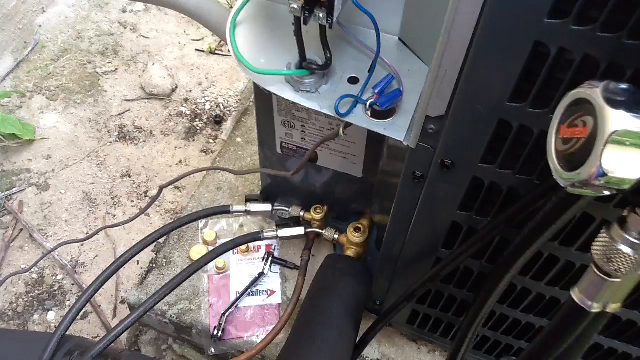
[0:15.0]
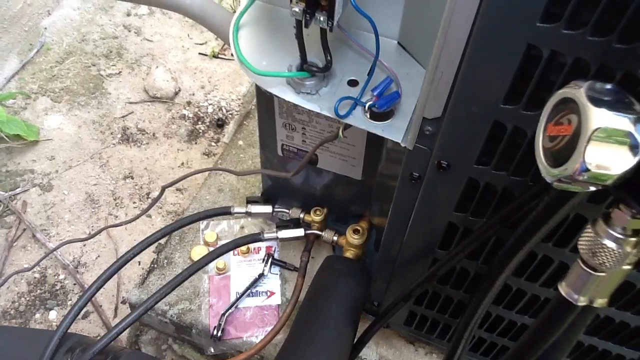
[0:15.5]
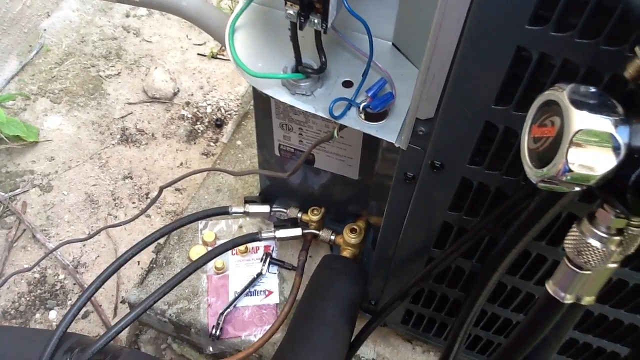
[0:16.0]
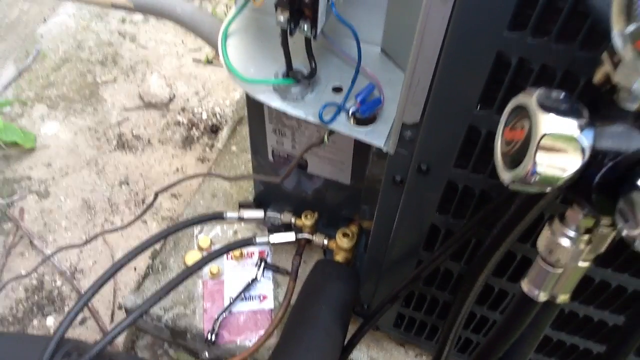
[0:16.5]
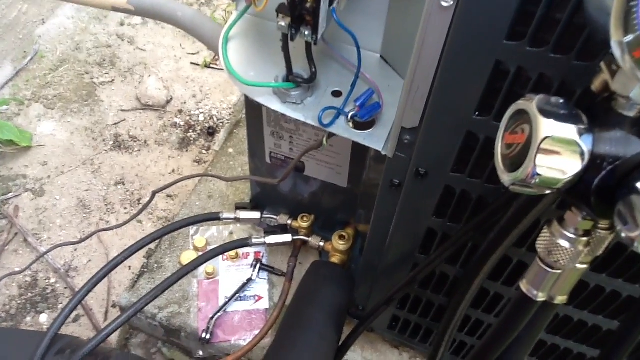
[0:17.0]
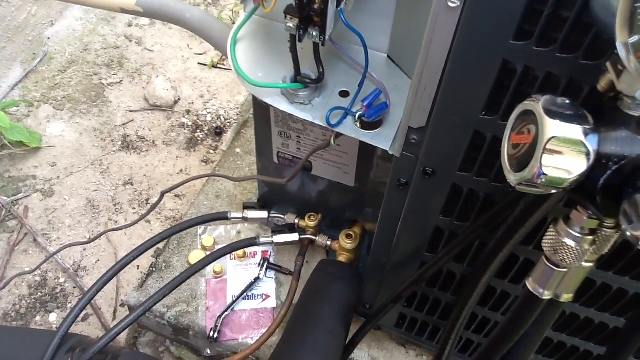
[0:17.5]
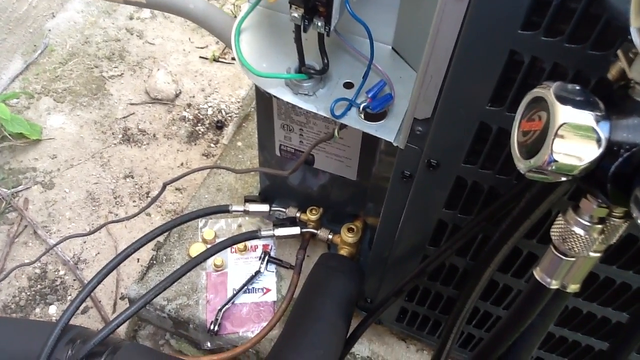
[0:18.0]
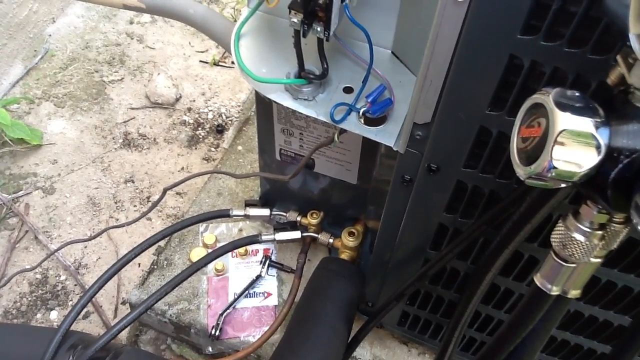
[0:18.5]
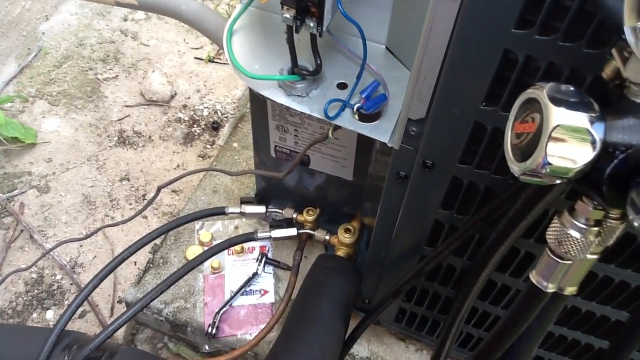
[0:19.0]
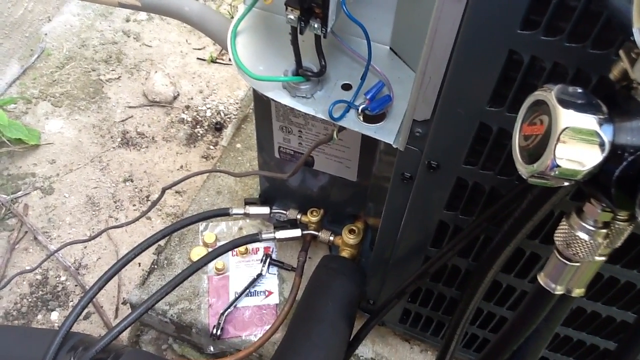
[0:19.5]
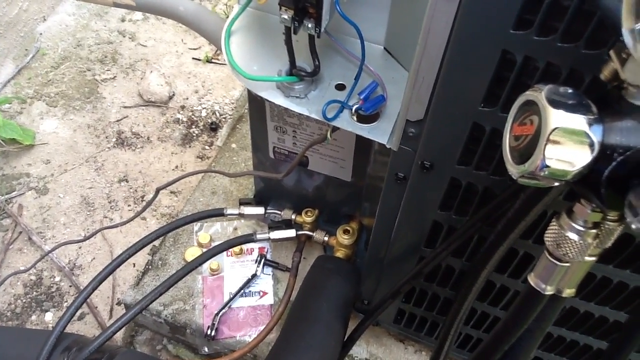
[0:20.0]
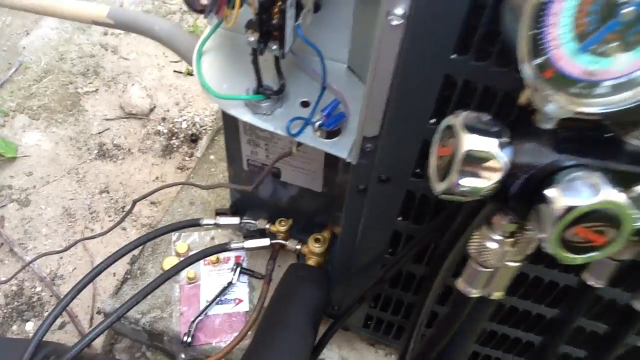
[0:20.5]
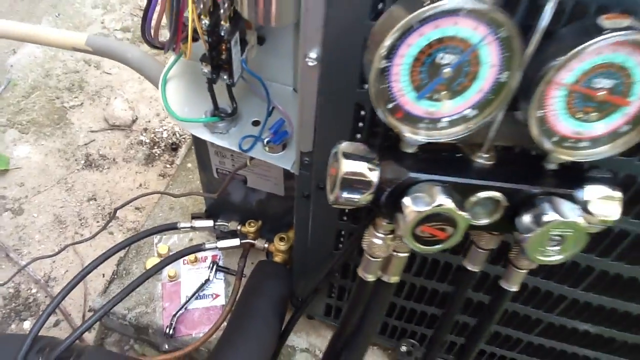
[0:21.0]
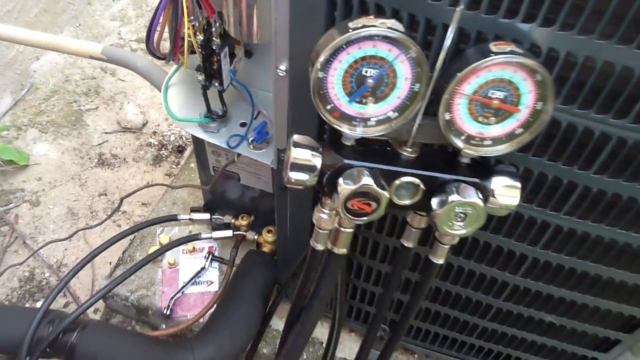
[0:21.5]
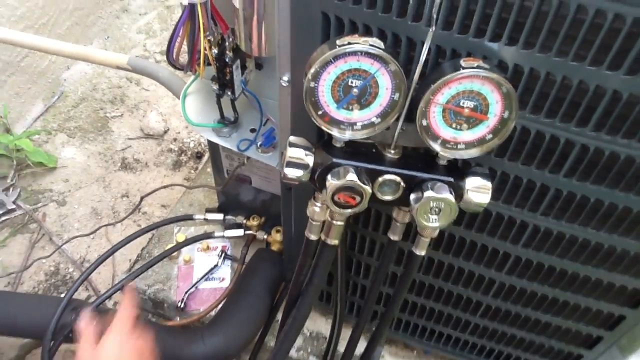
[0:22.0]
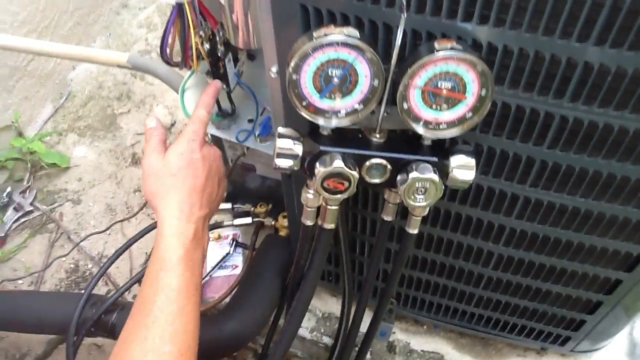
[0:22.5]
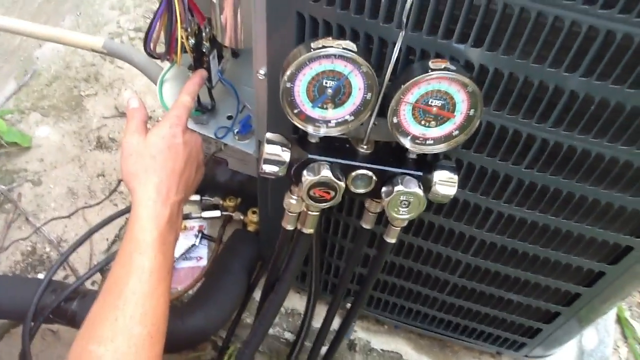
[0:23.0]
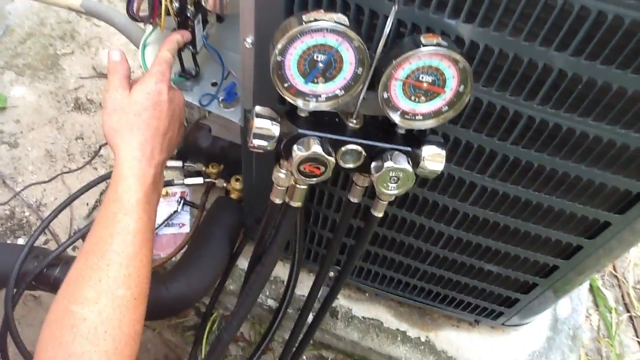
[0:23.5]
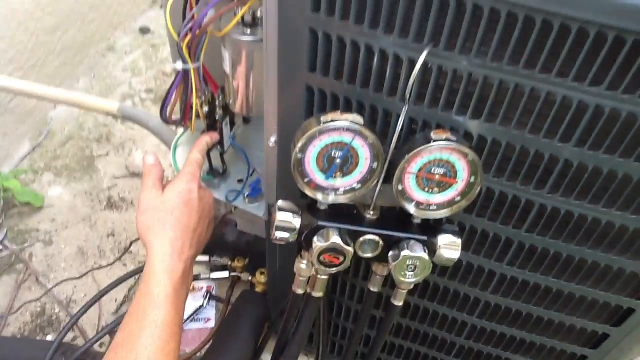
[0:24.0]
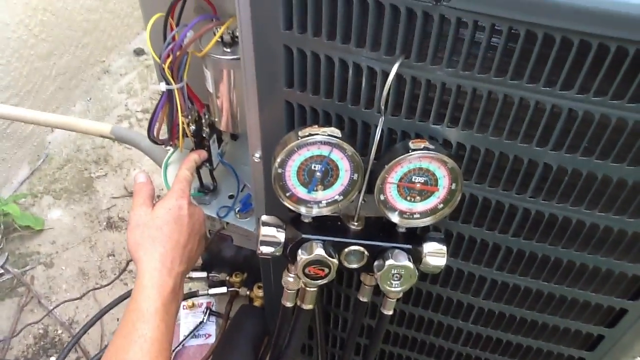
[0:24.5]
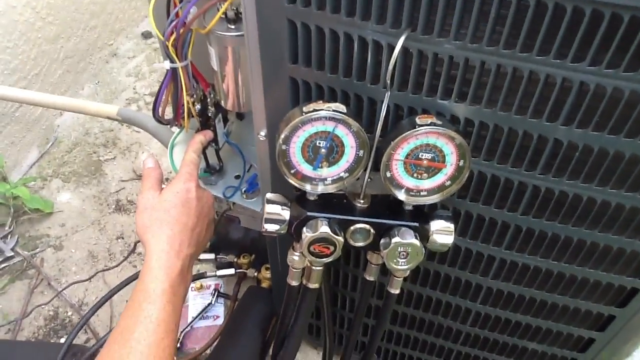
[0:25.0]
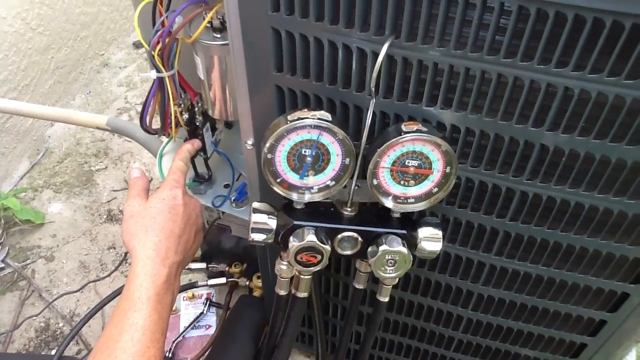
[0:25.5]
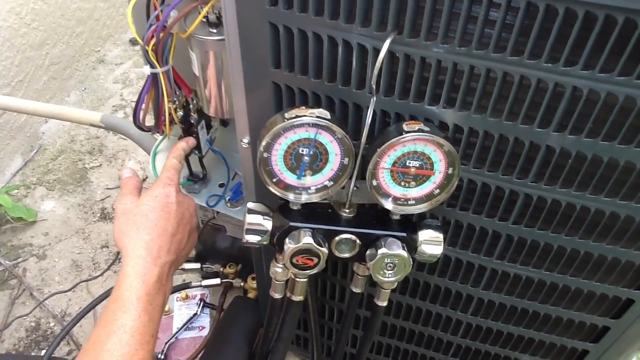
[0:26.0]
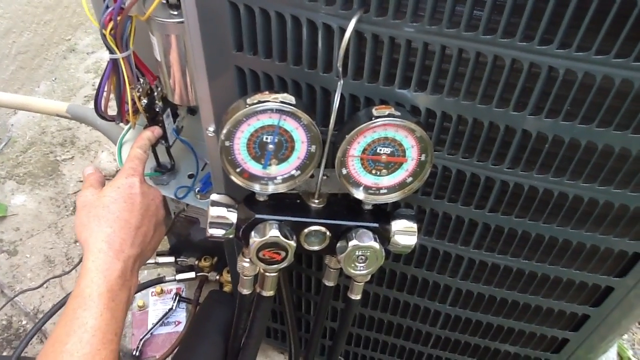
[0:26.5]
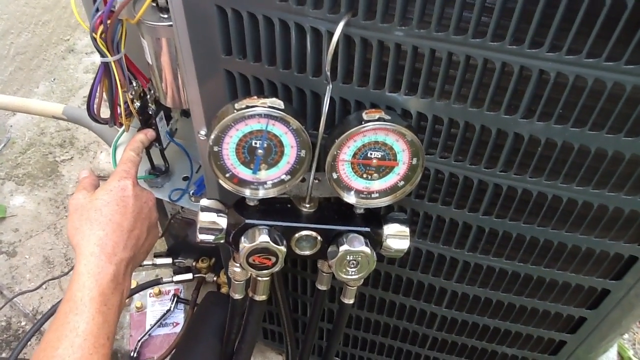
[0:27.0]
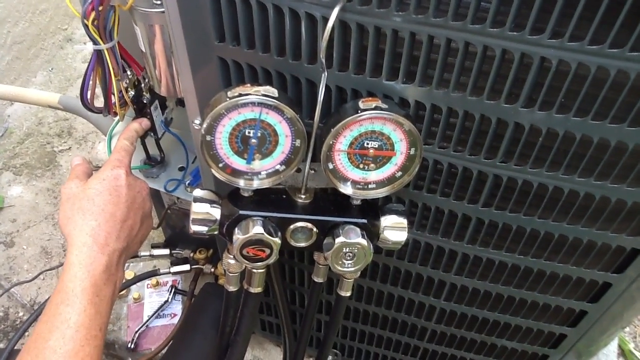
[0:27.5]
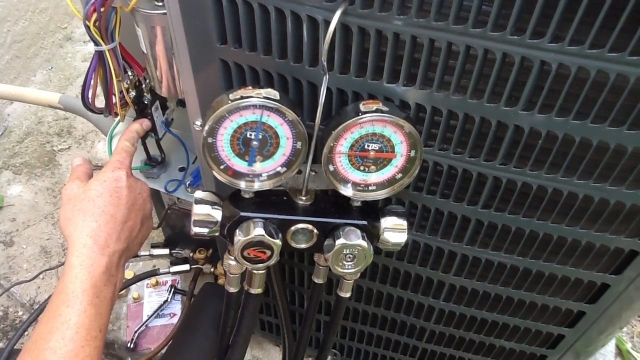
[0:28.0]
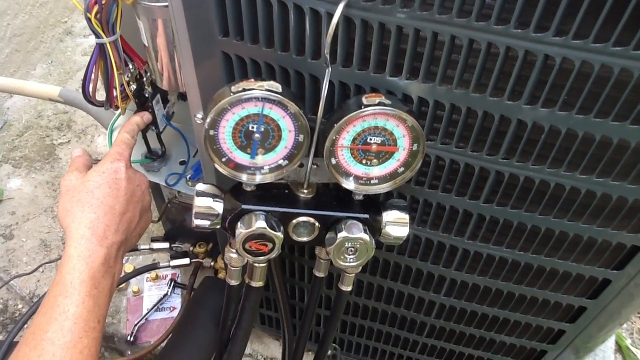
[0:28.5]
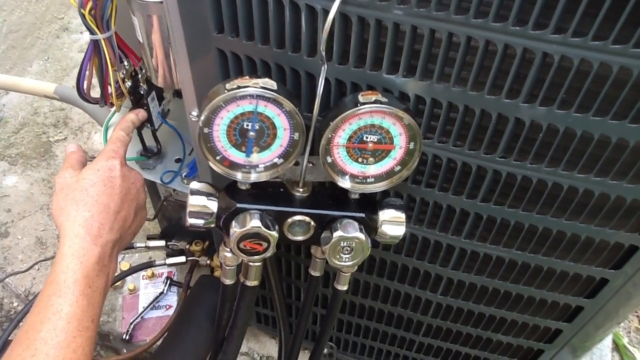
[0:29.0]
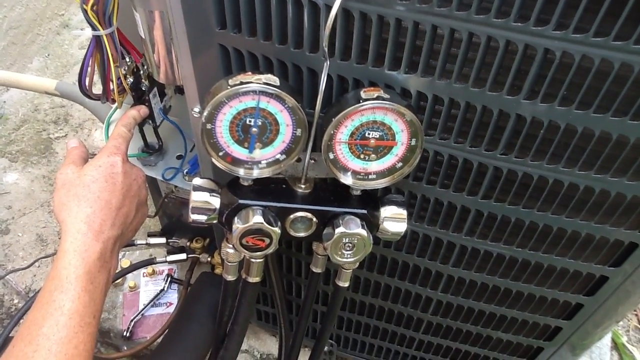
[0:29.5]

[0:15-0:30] An outdoor air conditioning or HVAC unit is shown. A big gauging machine is attached, hung on a hook, as if to gauge the amount of gas or Freon being put into the unit. Wire or black tubes come down at its bottom, along with gauge-looking meters for measuring gas or air, and thin black pipes run from the gauging device to the unit itself. A man's right hand points at a certain part of the machine. Other wires come out on the corner where he is, along with the inside electrical wires, and he looks at, points at and touches one section. The view then shows the ground, which looks sandy, possibly with some concrete, and a little grass around the sides. It cuts back to him touching a certain area on the machine, then shows the pipes and the gauging unit hanging from a hook on the side of the unit, by the vent.